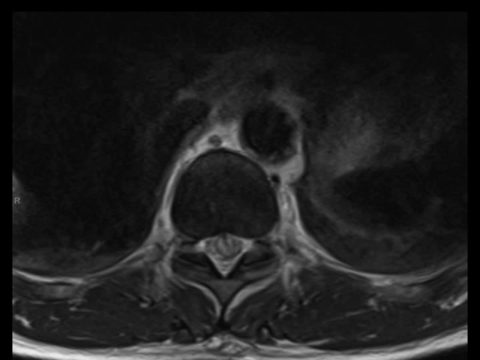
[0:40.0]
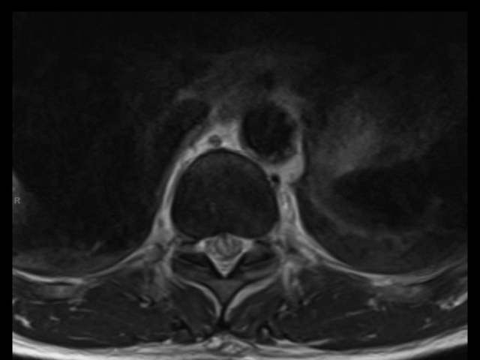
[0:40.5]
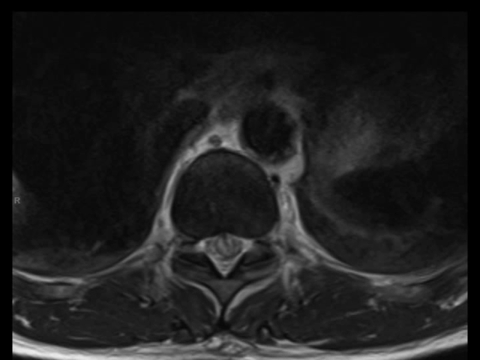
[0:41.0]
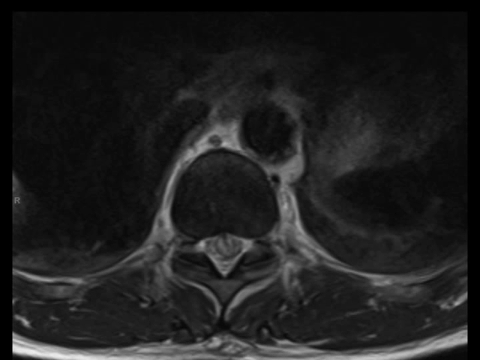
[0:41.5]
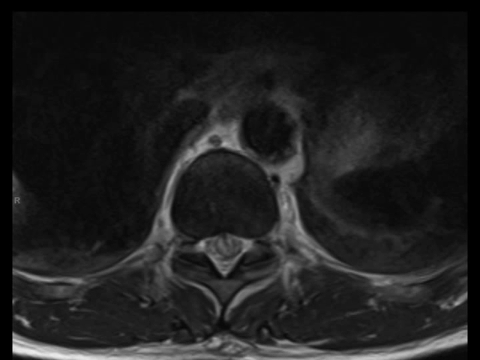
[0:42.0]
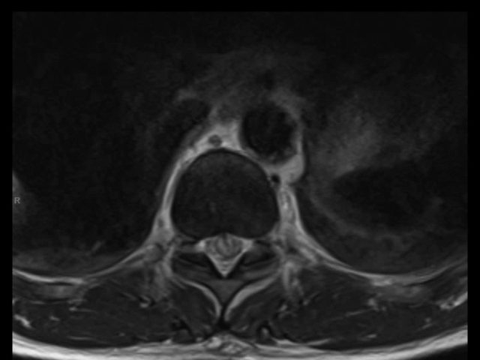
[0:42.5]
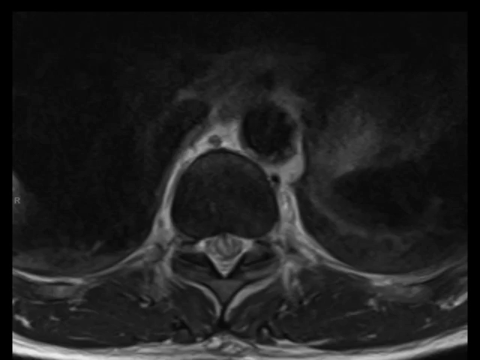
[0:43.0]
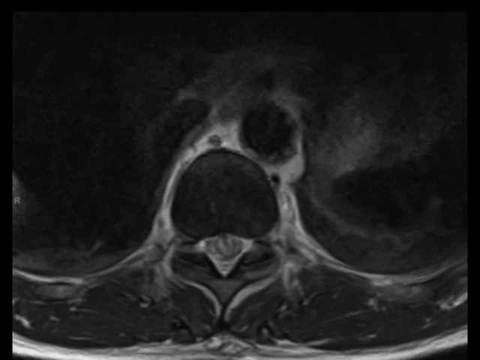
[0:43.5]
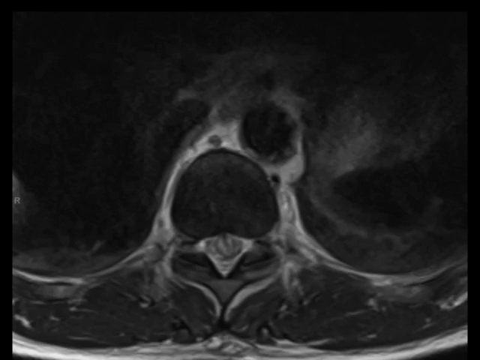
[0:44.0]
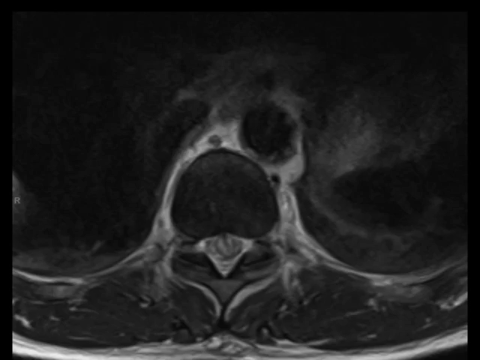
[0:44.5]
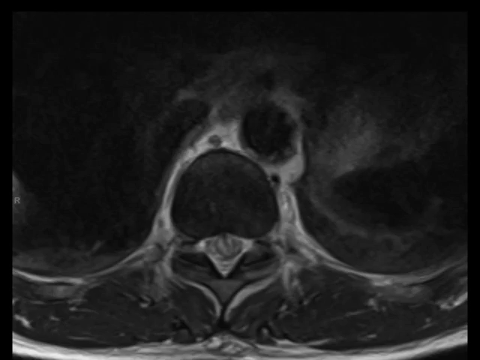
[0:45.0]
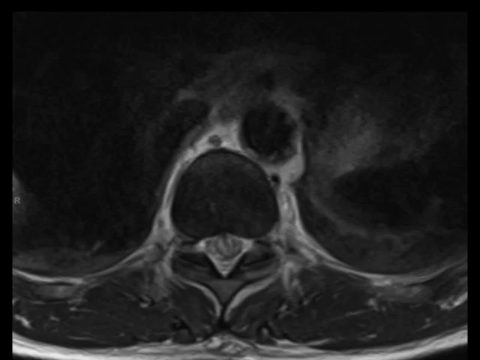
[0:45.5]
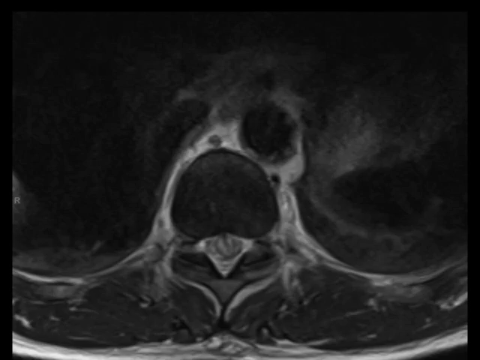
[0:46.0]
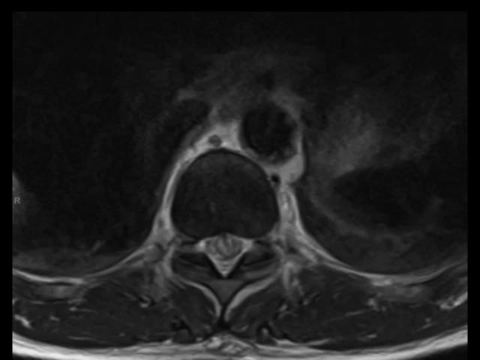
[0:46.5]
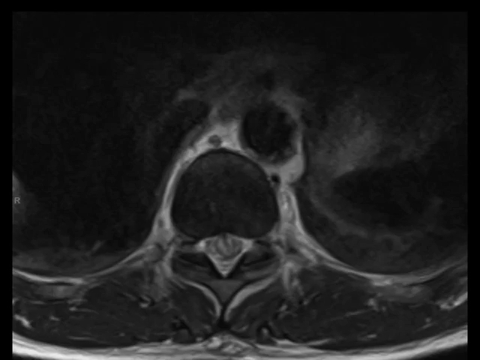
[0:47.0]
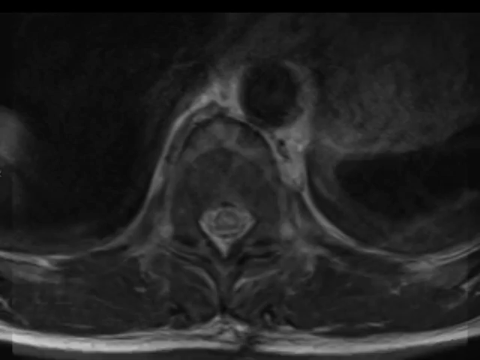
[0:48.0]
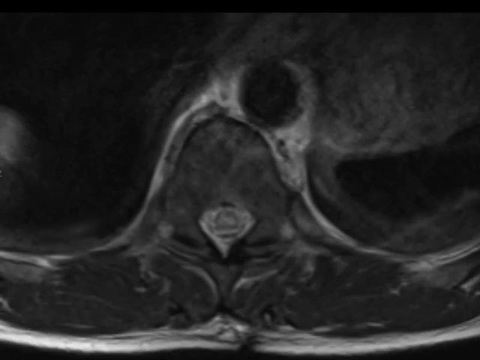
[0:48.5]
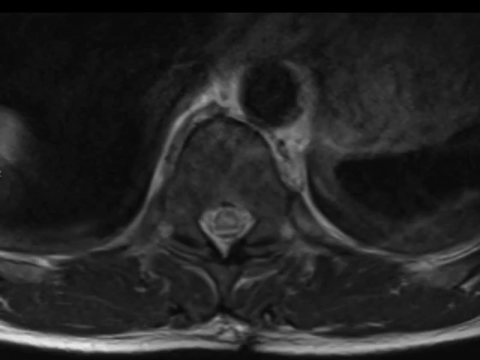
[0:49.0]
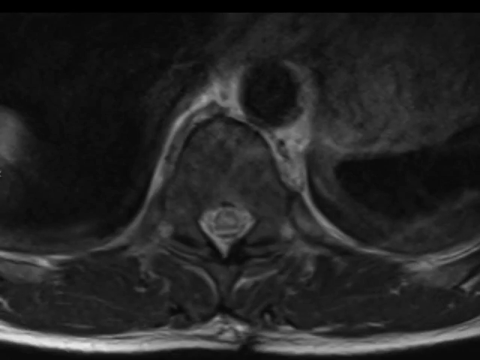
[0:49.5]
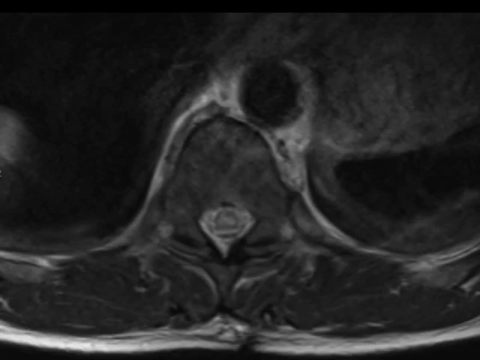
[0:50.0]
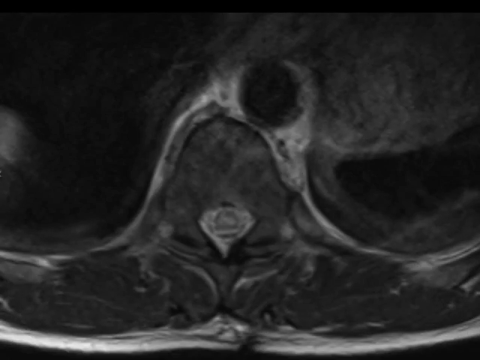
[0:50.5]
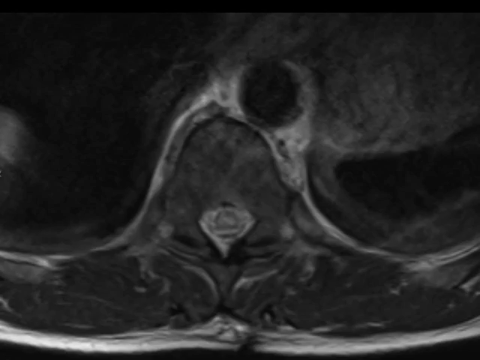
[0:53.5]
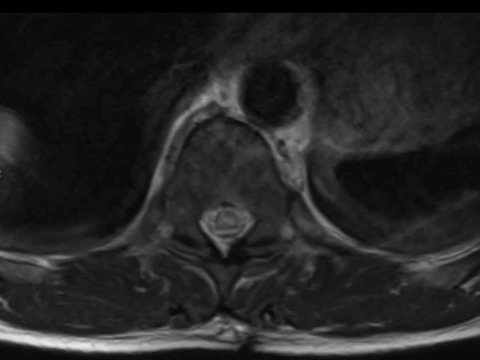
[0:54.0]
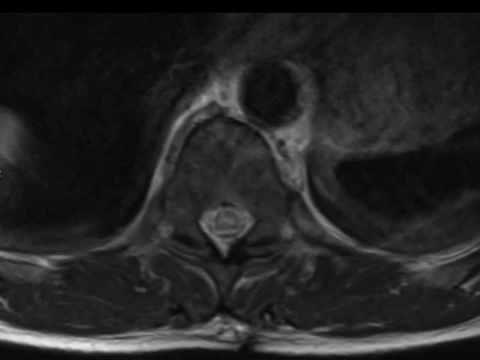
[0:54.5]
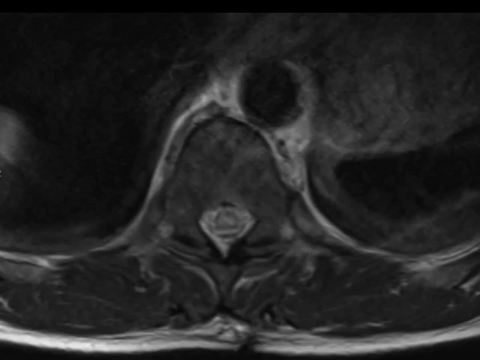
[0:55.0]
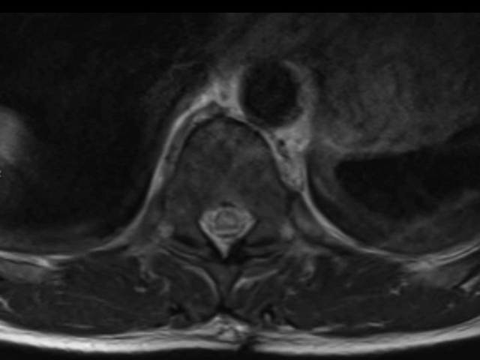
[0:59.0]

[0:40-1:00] A square with a black background shows what appears to be an X-ray of possibly a skull. It has two very black circles near the top and a larger black circle in the center, surrounded by white and gray areas; it looks almost like two large eyes with a large open mouth below. In the bottom center of the image is an almost heart-shaped outline with a kind of white outline and gray in the middle, below what might be a wide open mouth. Right below what looks to be an open mouth, a kind of V-shaped white area juts down into the area that looks almost heart-shaped. White lines go out from the side of the image, curving down and then a little back up. Below that it is mostly black, with some wispy white surrounding those lines.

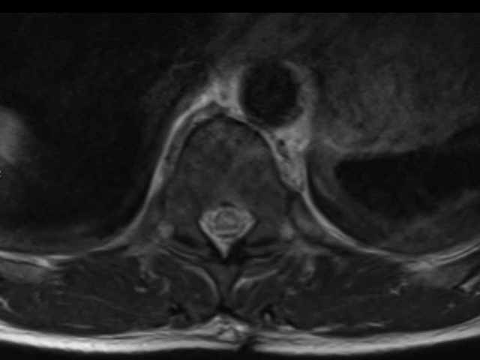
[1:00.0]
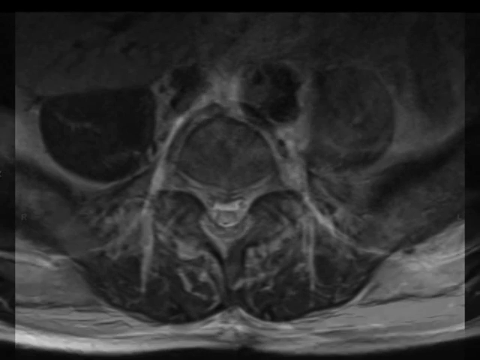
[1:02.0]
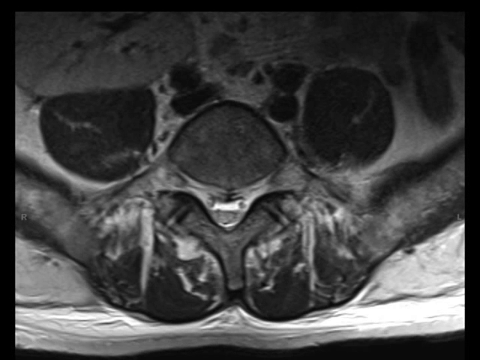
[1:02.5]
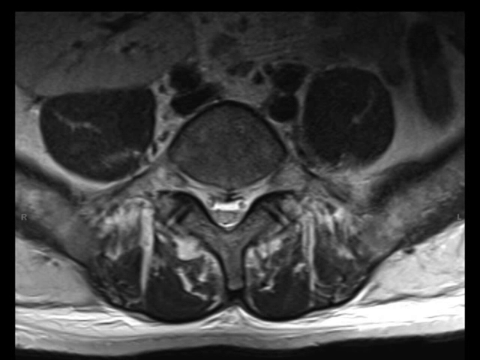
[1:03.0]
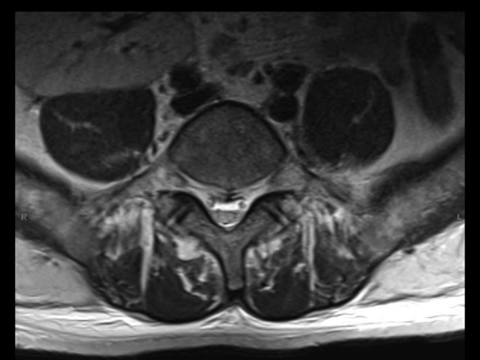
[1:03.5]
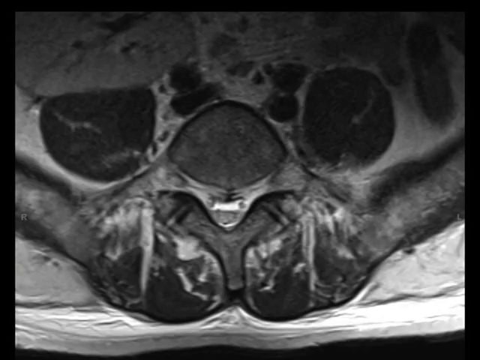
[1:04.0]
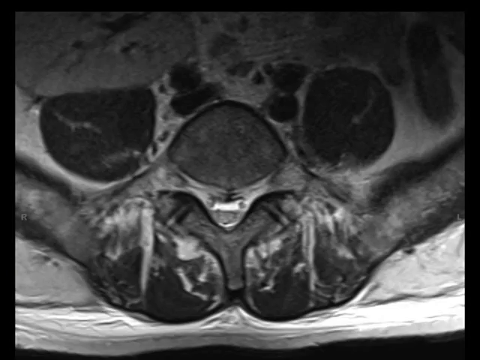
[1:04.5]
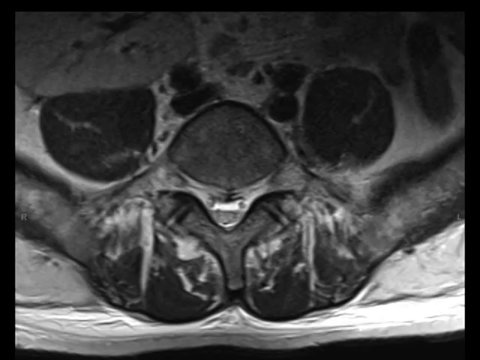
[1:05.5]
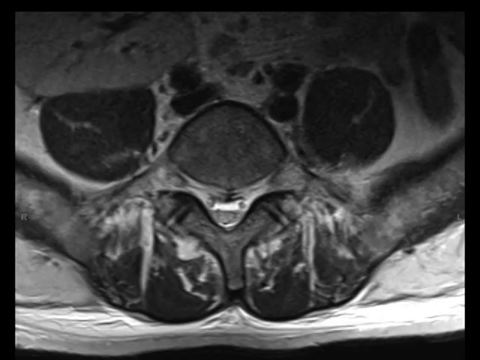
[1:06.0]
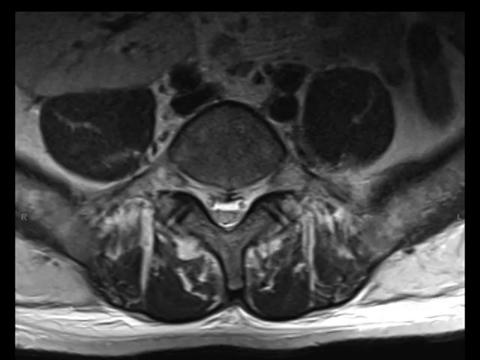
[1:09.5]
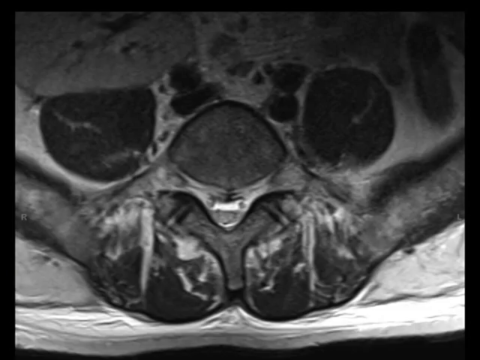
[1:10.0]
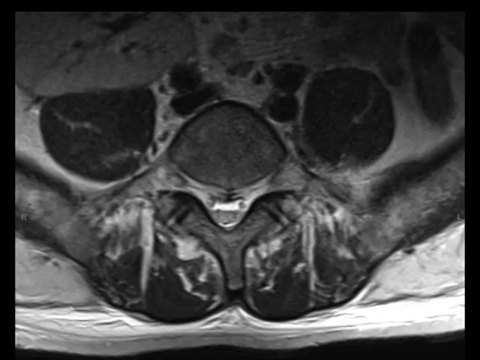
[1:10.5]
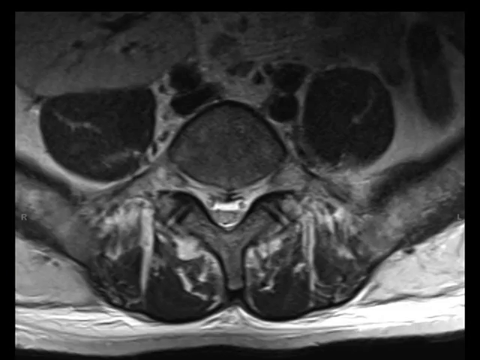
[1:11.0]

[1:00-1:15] An image that looks like an X-ray of part of a spine is set against a dark black background. The spine starts at the center of the bottom of the screen, goes up a little diagonally to the right, and then curves toward the left. It then changes to a more shadowed view of the spine, with only the center vertical line and part of the right vertical line at the edge of the spine visible in white while the rest is very shadowed. It then changes to a much more detailed picture in which different vertebrae or objects can clearly be seen going from left to right within the spine. Next comes an X-ray of what appears to be the shoulders, neck and skull area of perhaps a human. The top of the shoulders seems to be outlined in white, and there are two very large black circles at the top of the skull with a larger black circle beneath them. It then moves to a closer version of this picture, which becomes less clear, with some areas very obscured in shadow. Then there is a close-up of a skull that appears more like an animal than a human. The dark black circles of the eyes are clearly visible, as well as a black semicircle for the nose and the jaw with some teeth. There appear to be almost a couple of fangs within the mouth area.